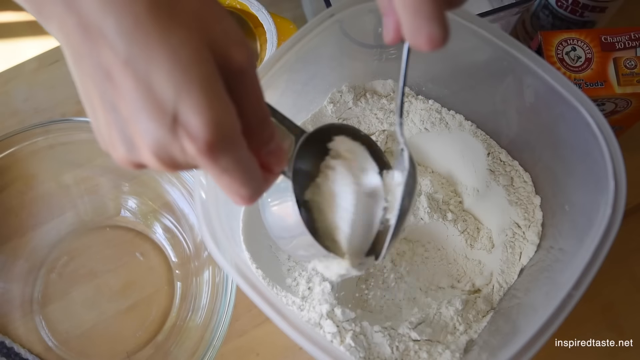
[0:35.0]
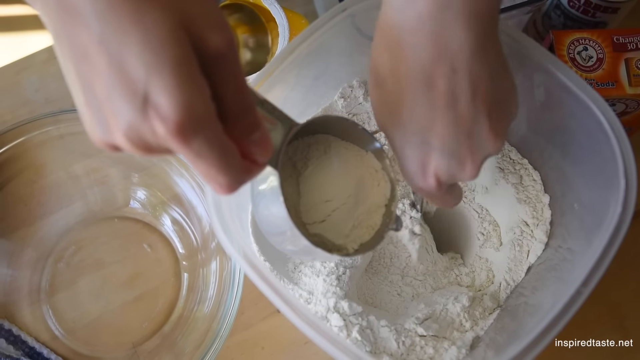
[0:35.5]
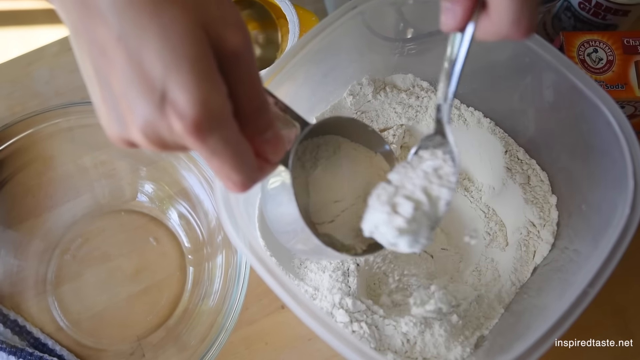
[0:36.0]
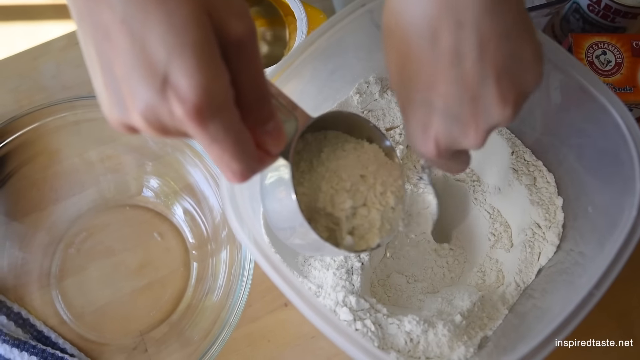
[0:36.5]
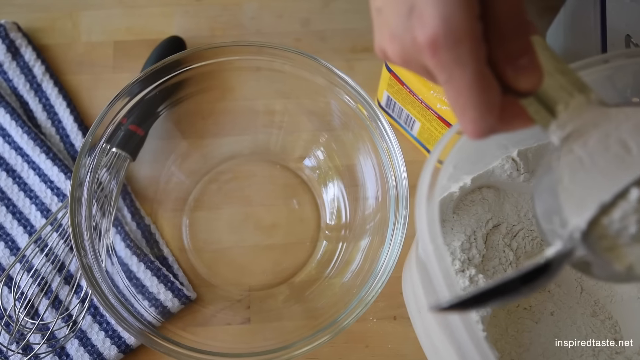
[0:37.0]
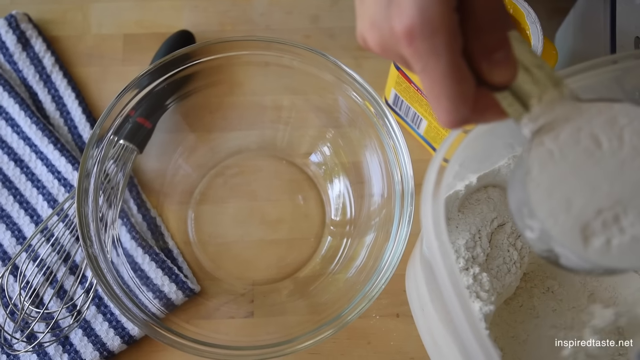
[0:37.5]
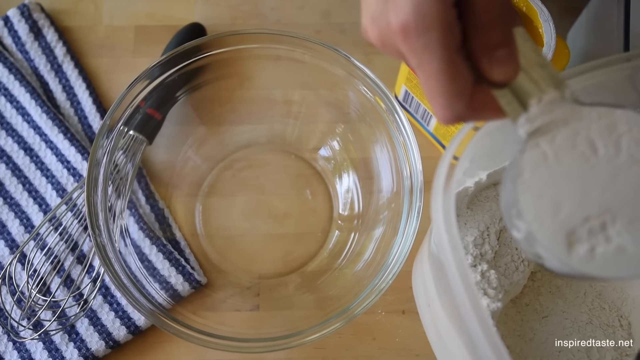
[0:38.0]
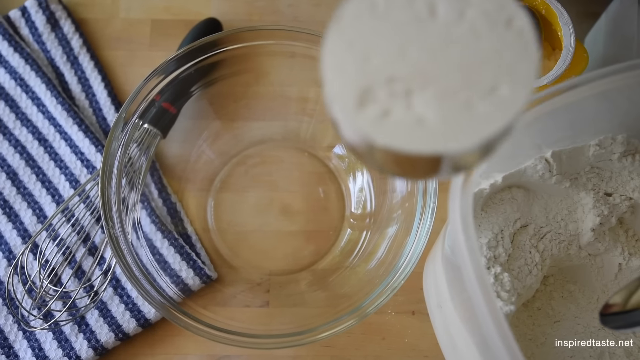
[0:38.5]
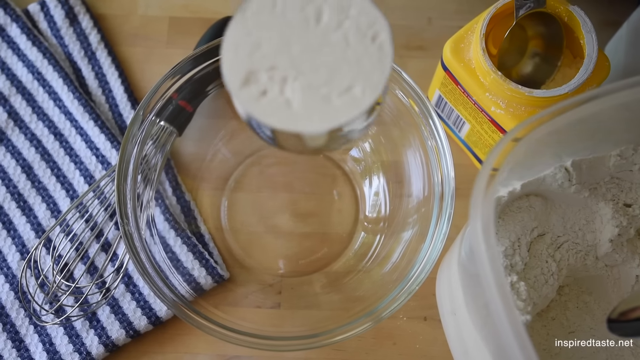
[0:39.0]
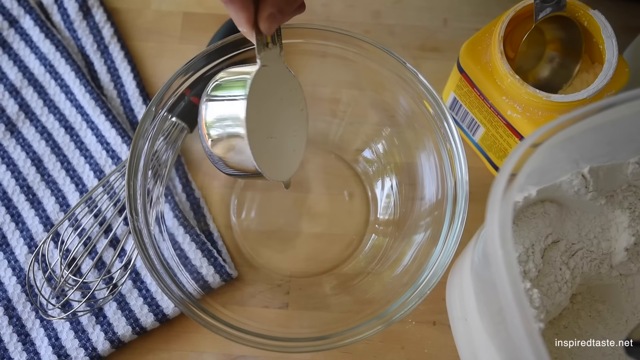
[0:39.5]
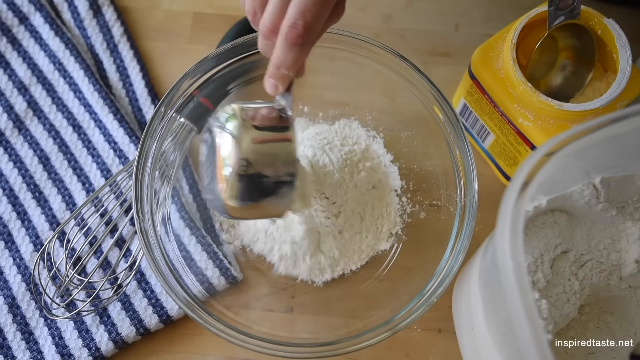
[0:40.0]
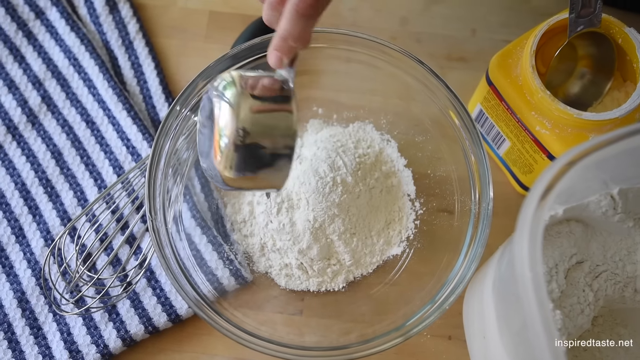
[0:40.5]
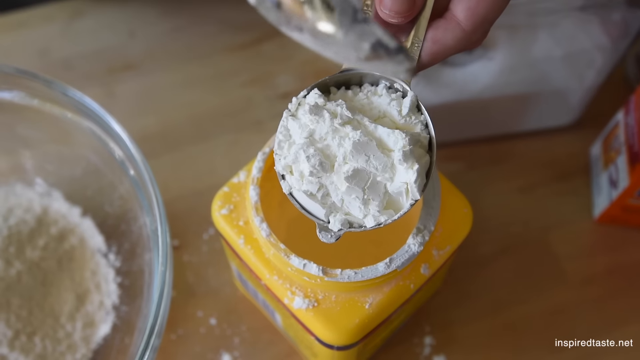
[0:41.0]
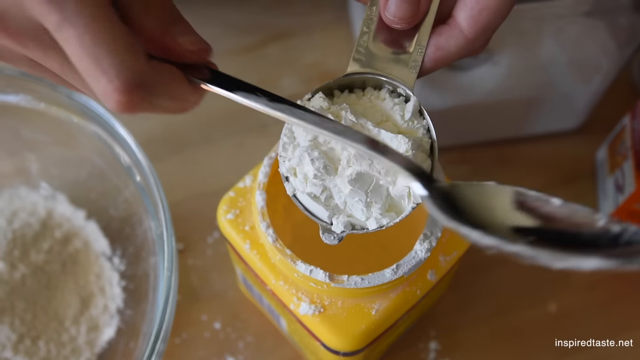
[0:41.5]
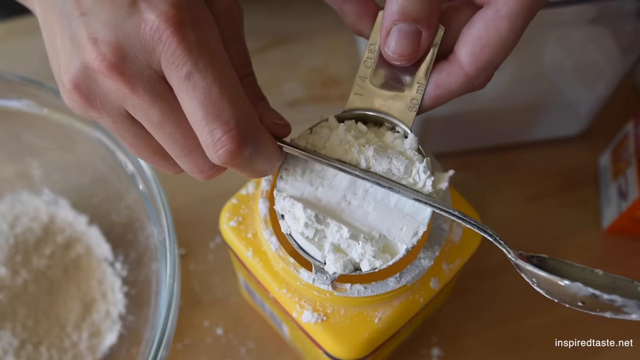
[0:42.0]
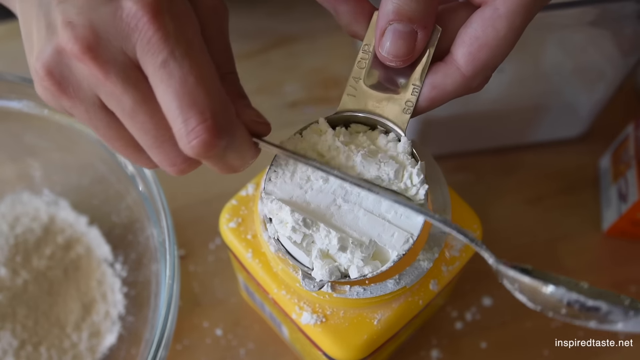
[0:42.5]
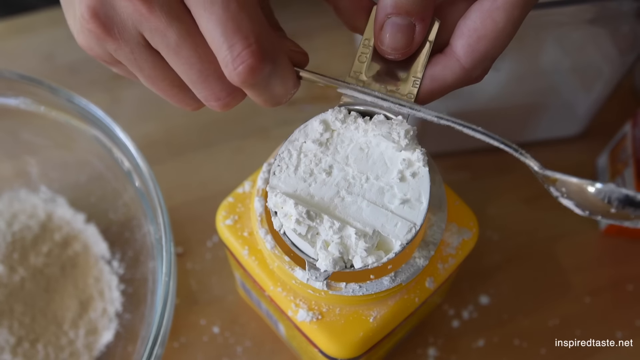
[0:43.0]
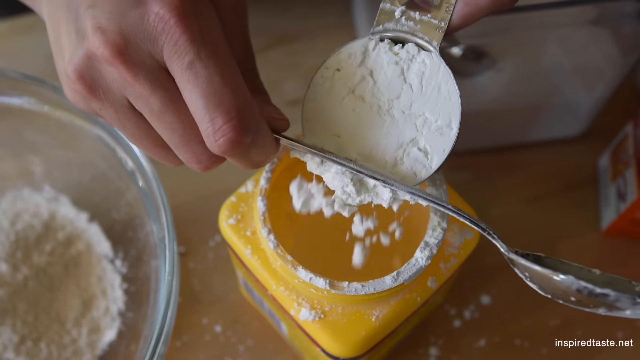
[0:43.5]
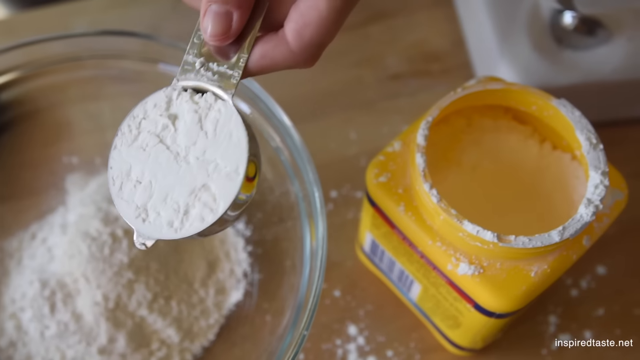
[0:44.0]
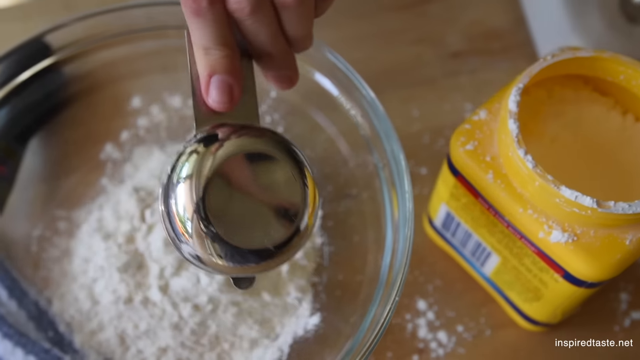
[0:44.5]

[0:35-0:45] The text "Easy Crispy Waffles Recipe" is at the top, and a "Subscribe Now" button is at the bottom of the video. After play is pressed, a plastic container appears, and someone uses a spoon to put flour and then baking powder into measuring cups, using the handle of the spoon to level them. They hold the flour measuring cup in their right hand and the baking powder measuring cup in their left, scooping back and forth with different hands, and drop the items one by one into a clear bowl. Beside the bowl are a whisk and a blue and white striped dish towel. Baking powder gets on the counter, and a box of baking soda is in the background.